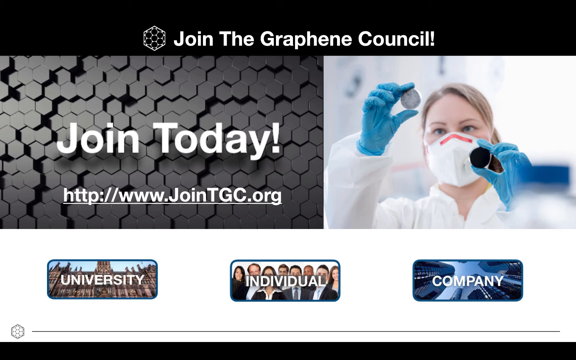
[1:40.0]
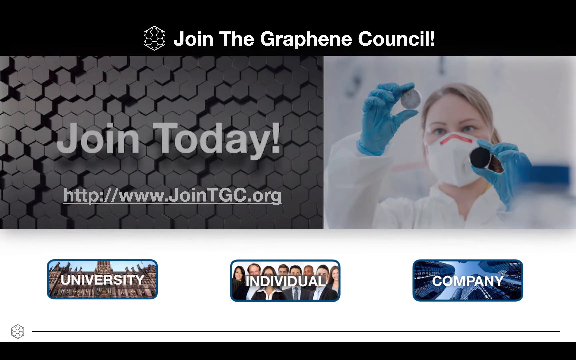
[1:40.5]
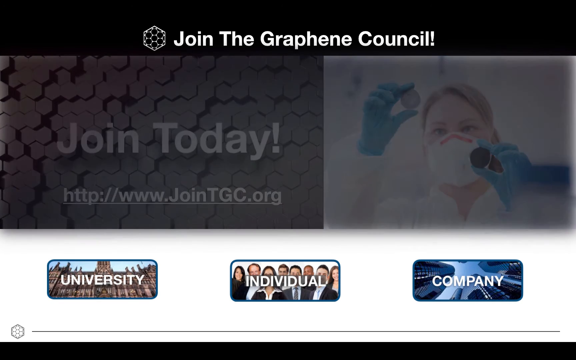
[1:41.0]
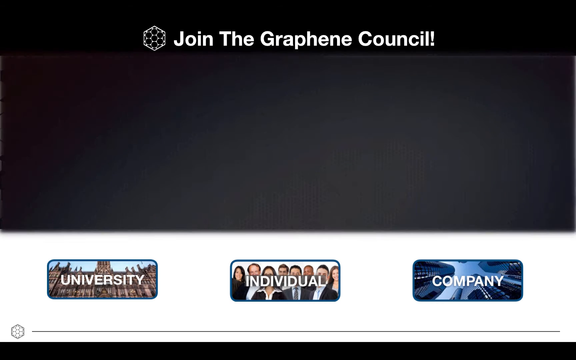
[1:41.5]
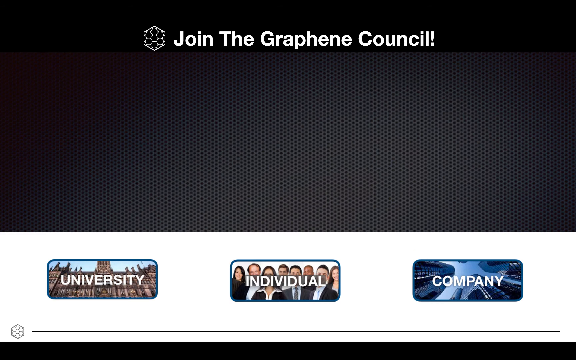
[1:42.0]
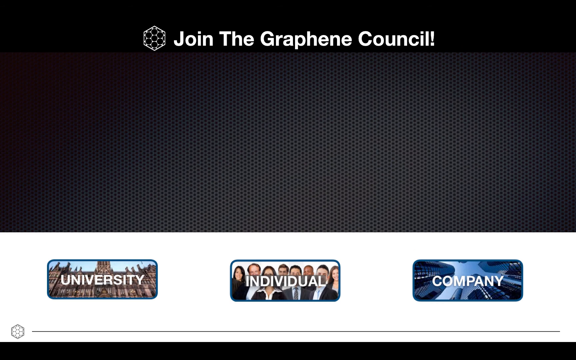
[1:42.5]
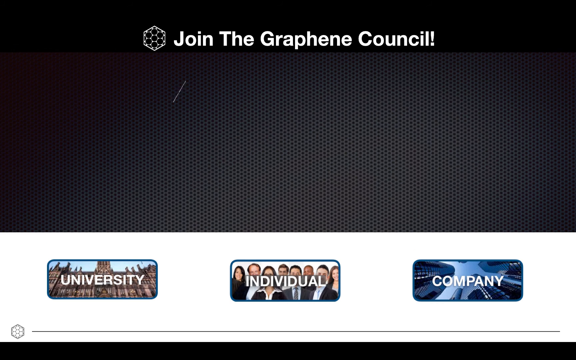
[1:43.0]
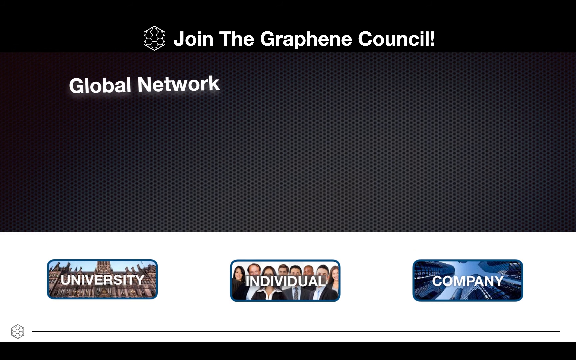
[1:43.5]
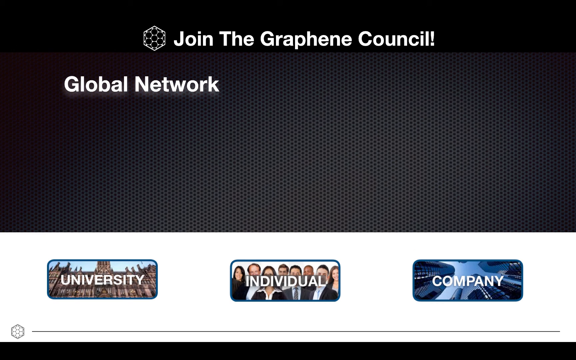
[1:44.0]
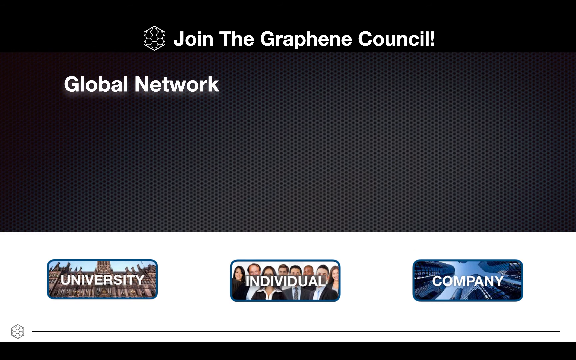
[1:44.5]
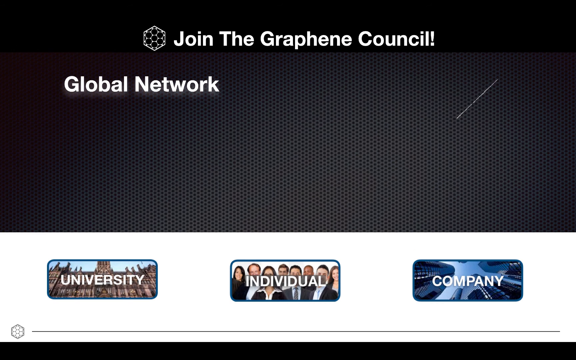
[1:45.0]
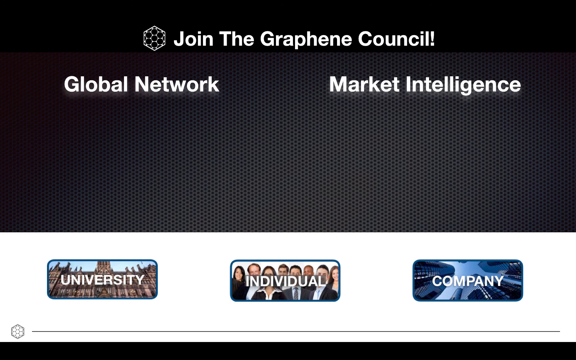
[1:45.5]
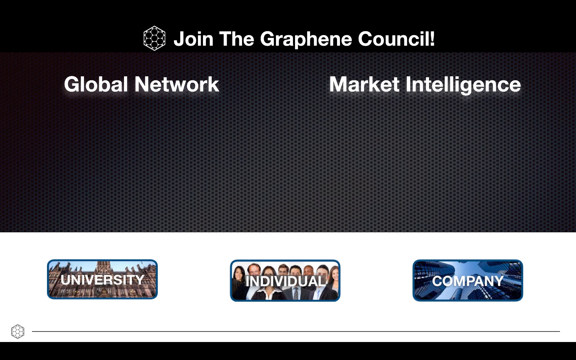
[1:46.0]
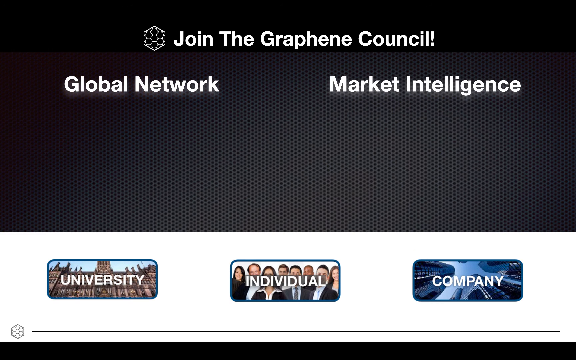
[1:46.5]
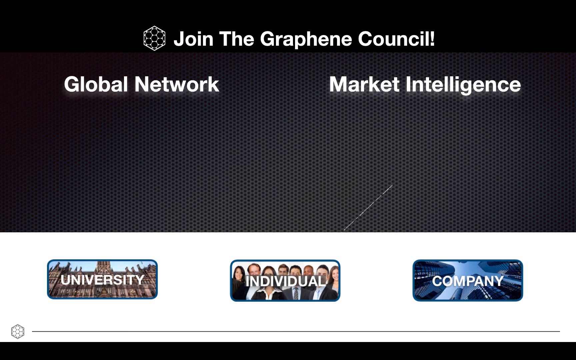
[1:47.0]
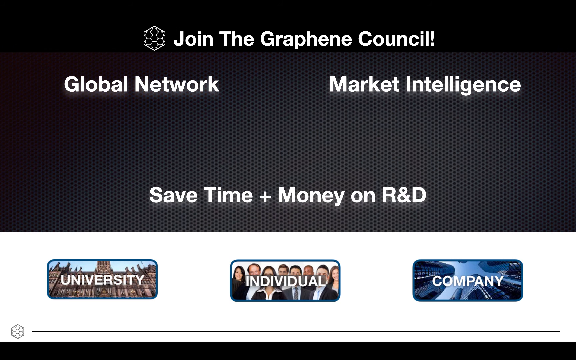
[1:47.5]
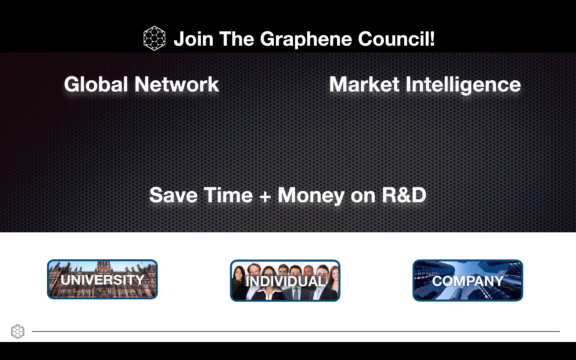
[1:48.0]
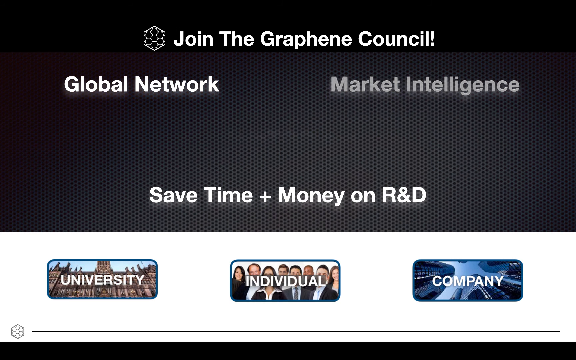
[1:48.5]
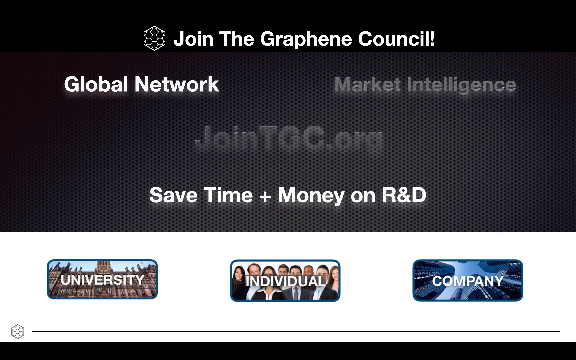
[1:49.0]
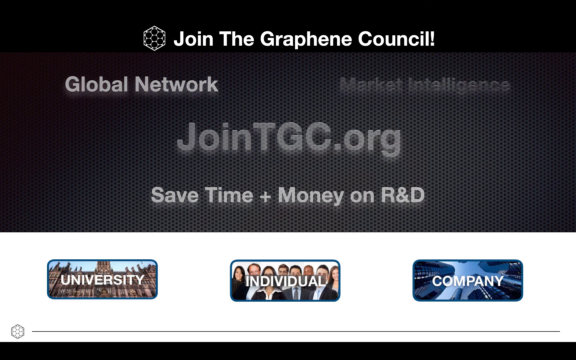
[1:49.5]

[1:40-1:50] White text reads "join today," with the hyperlink "http://www.jointgc.org" beneath it. This fades away, and the image of the woman holding the two circular objects appears, with the "university," "individual" and "company" boxes beneath it, rectangular with rounded corners. It fades into "global network," written under "join the graphene council," with "market intelligence" across from it, and "save time + money on R&D" centered at the bottom. Then "jointgc.org" fades in large in the middle, and as it does the "save time" text fades away. The background is made of many tiny, uniform honeycombs that look textured.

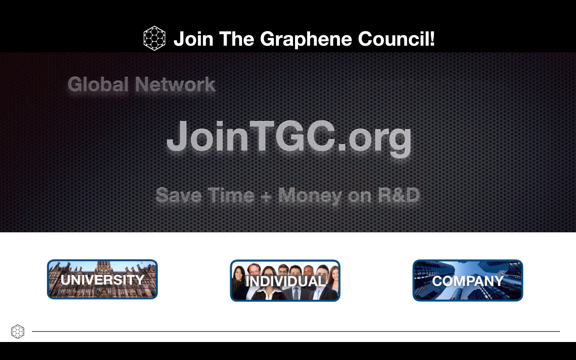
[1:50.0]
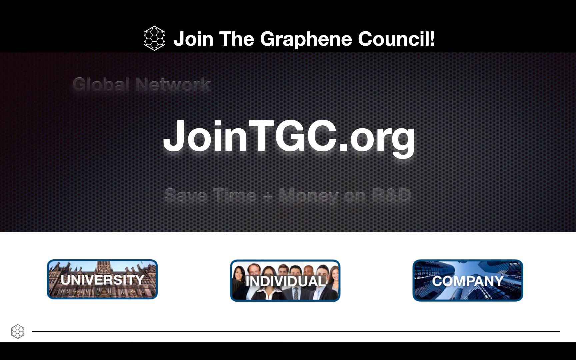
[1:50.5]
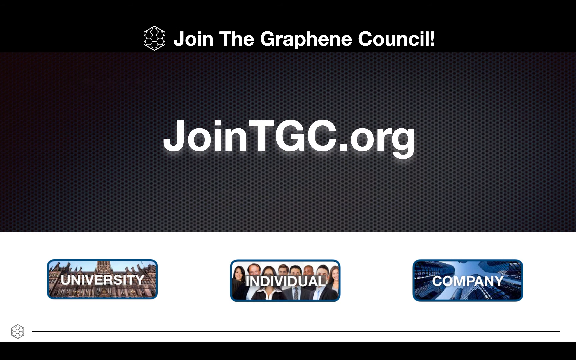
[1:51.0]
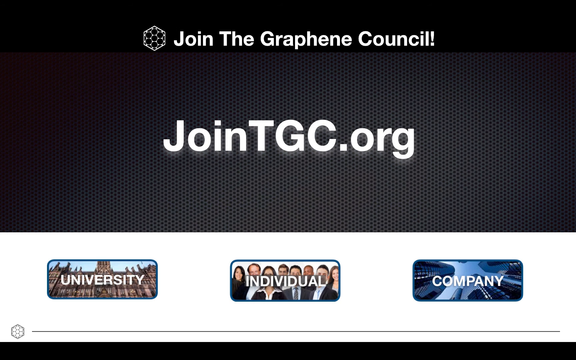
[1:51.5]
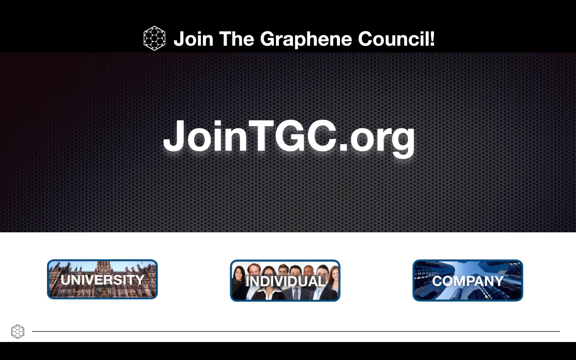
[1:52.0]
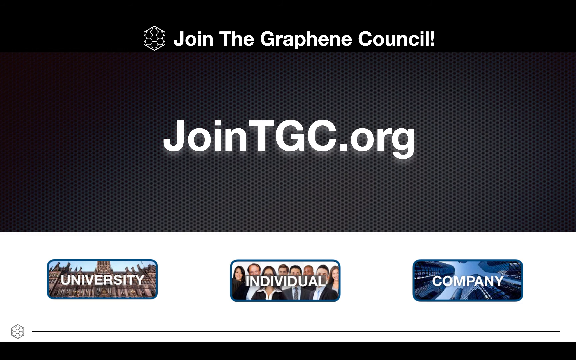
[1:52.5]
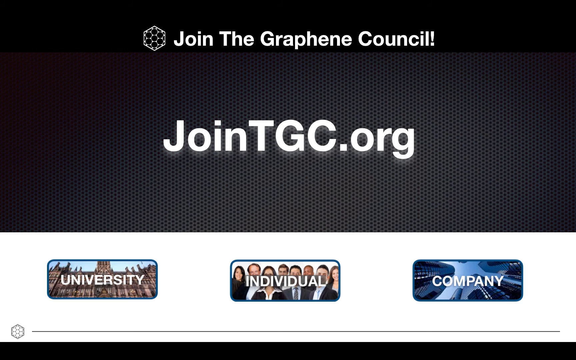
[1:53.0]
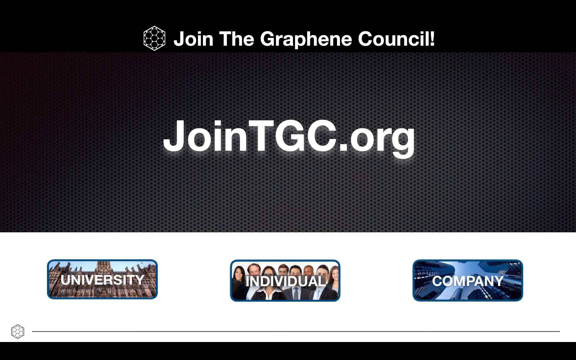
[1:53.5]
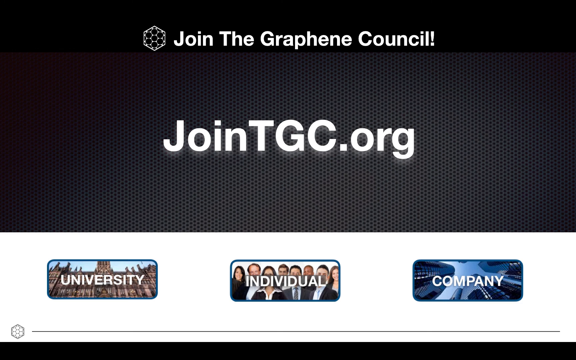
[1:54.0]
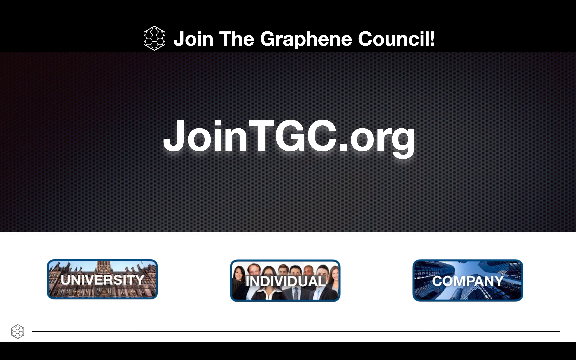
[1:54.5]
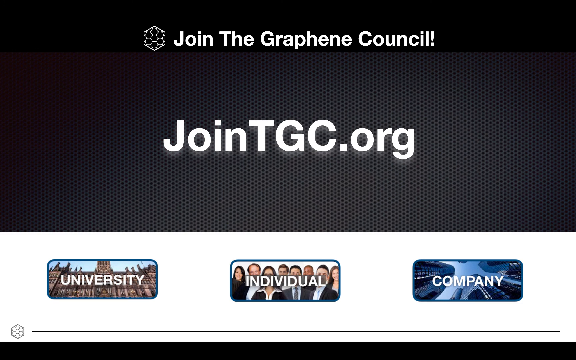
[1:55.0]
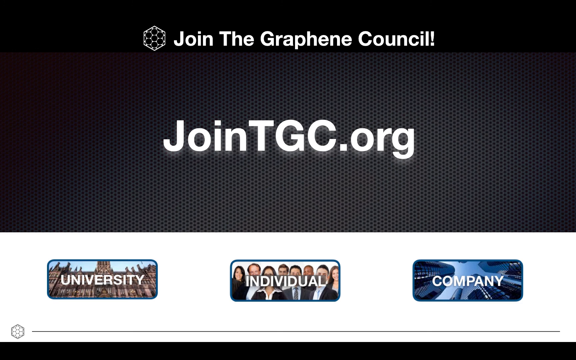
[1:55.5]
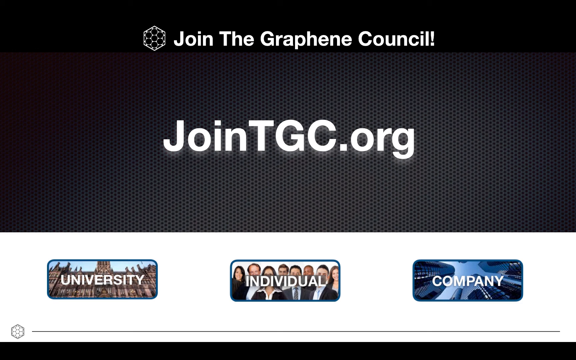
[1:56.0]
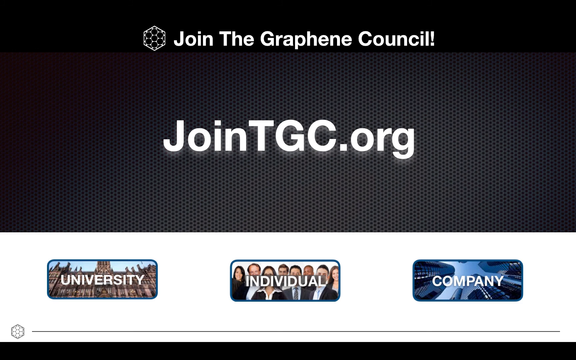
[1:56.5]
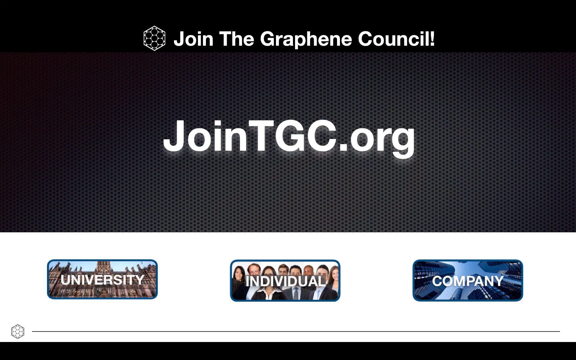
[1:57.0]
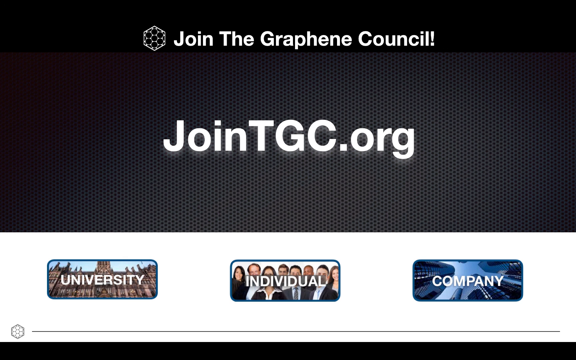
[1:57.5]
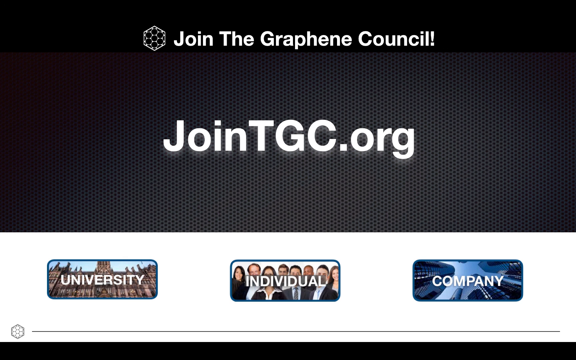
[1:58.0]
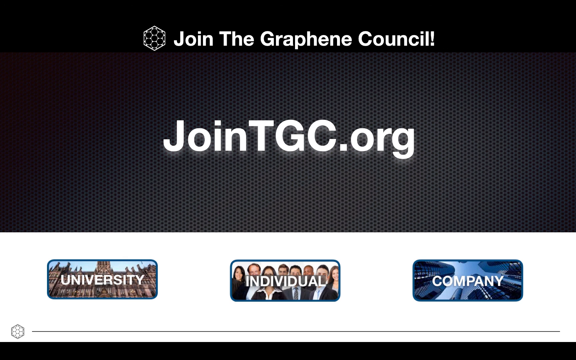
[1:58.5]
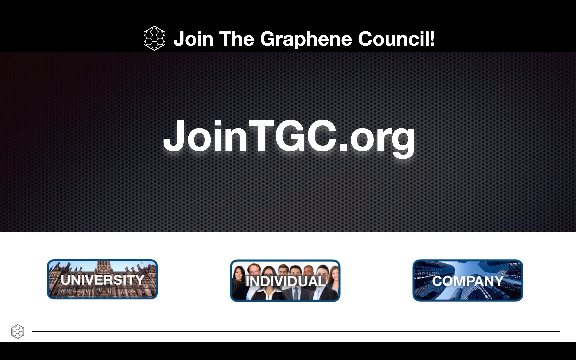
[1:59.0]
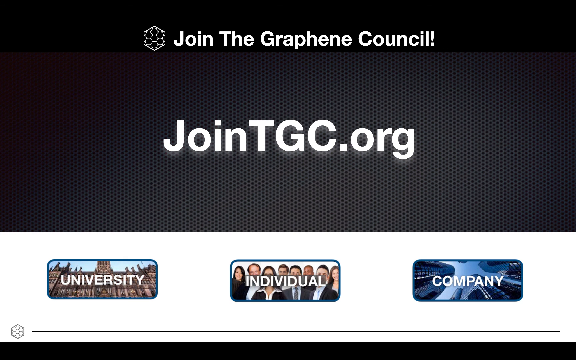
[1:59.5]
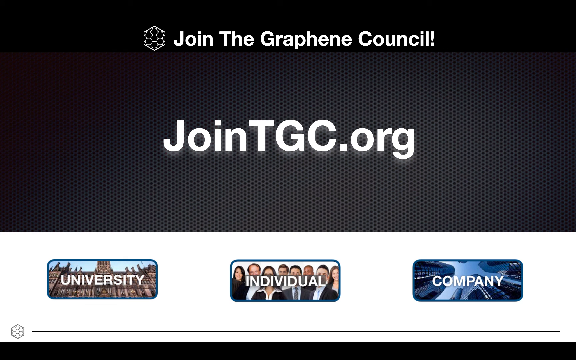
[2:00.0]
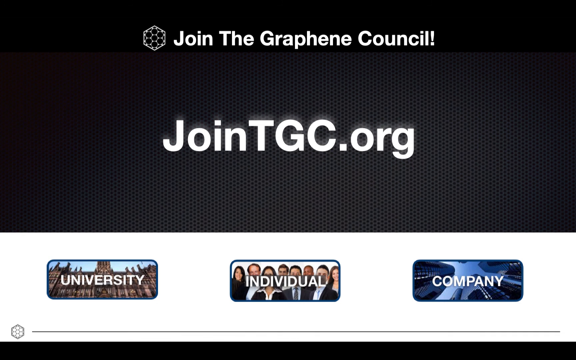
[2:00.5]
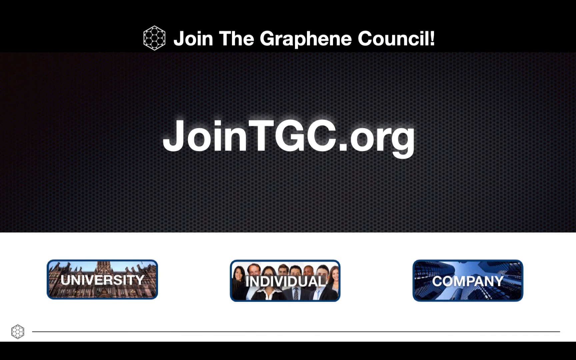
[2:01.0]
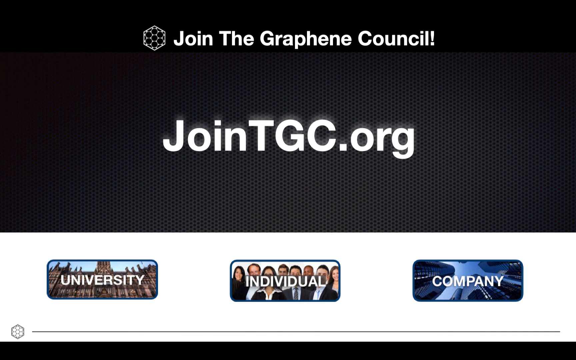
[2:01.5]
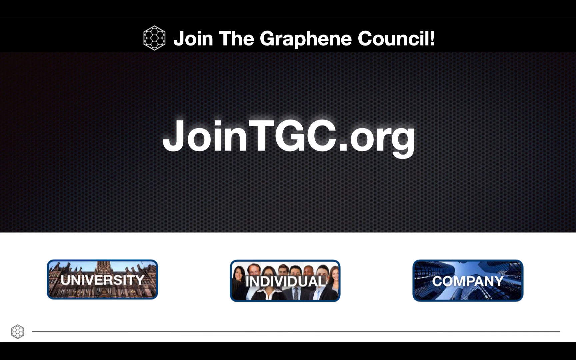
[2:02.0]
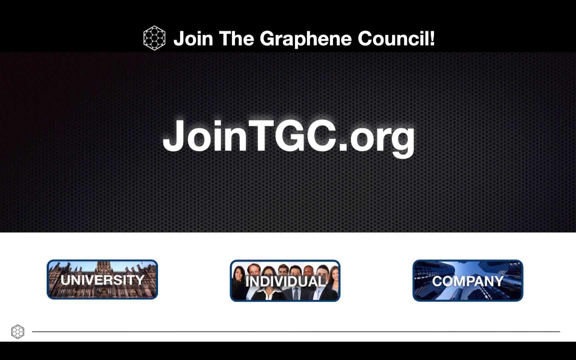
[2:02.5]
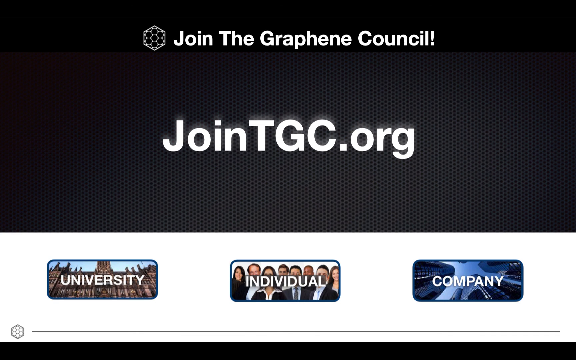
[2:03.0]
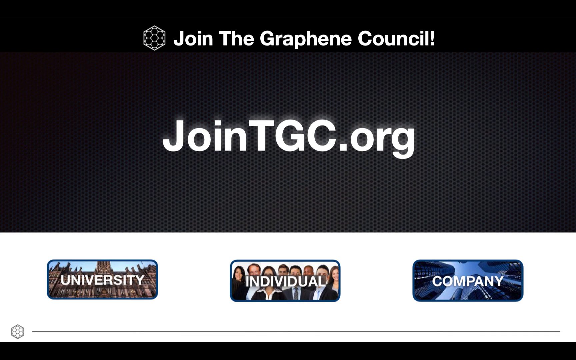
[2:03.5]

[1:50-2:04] The final slide reads "join the graphene council!" with an exclamation point. To the left are two six-sided shapes, hexagons with a point at the top. Beneath, in the middle center, is "JoinTGC.org" in white reverse print, with the J capitalized and TGC in all caps. The background is not solid black, though a black bar runs from left to right behind the "join the graphene" text, with a finely textured honeycomb beneath it. At the bottom, on a white background, are three small pictures: "university" in white text over a picture of what looks almost like a London building, "individual" over a group of about six or seven business people, and "company" over a cityscape shot from below looking up between buildings. The video looks like it glitches slightly and then ends.